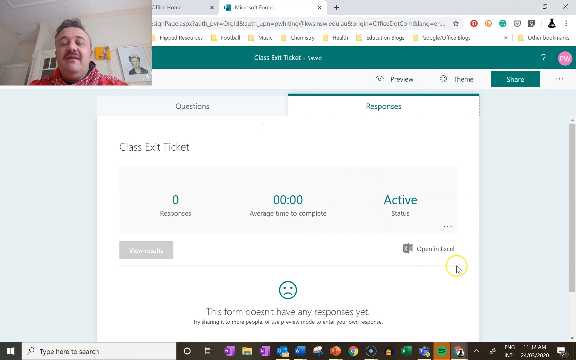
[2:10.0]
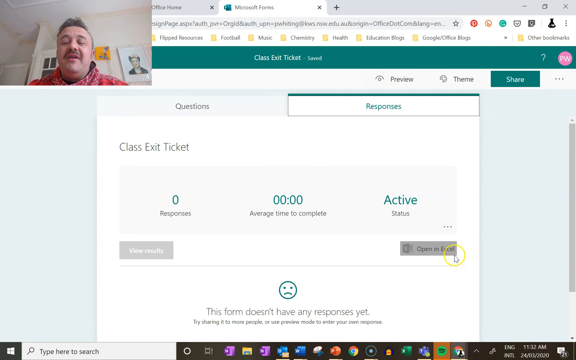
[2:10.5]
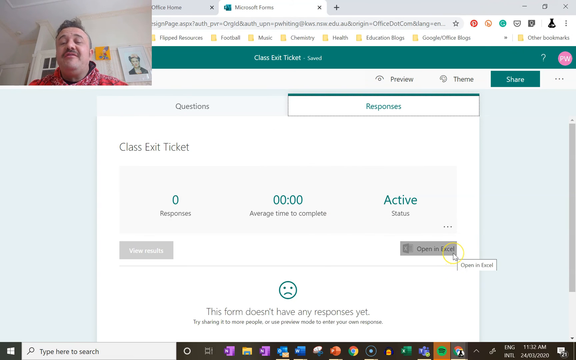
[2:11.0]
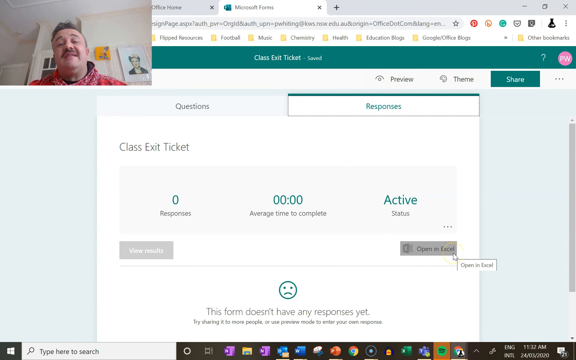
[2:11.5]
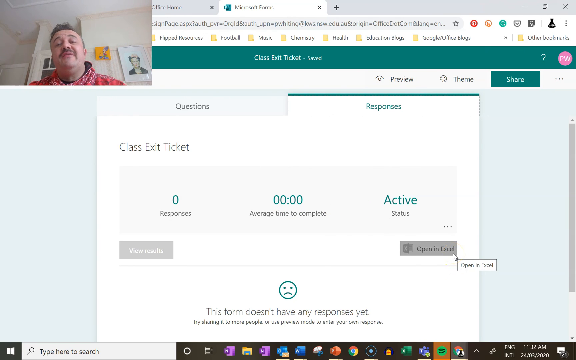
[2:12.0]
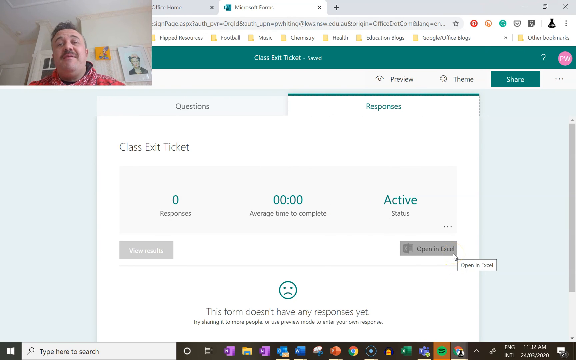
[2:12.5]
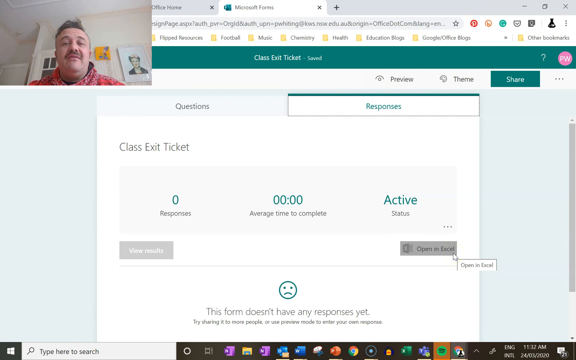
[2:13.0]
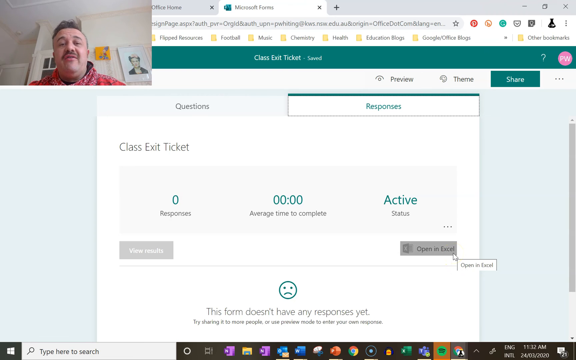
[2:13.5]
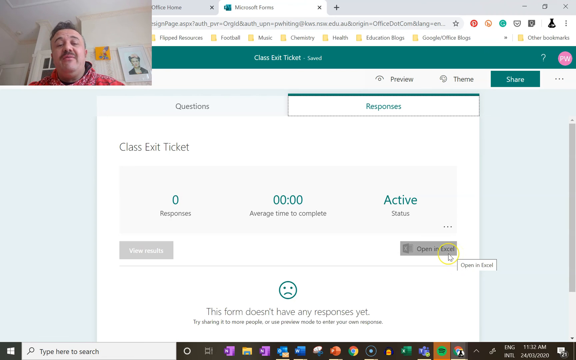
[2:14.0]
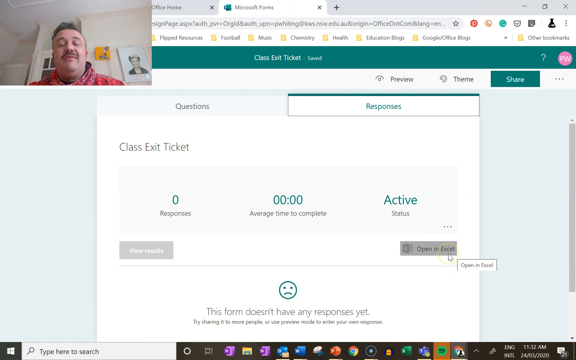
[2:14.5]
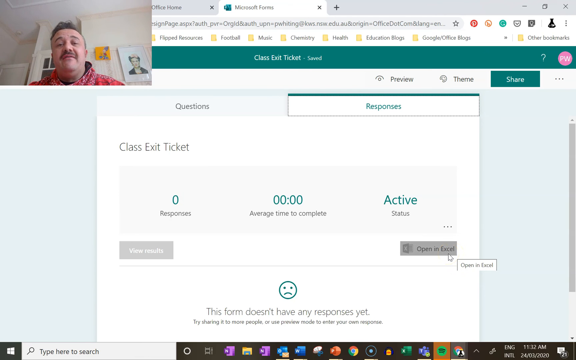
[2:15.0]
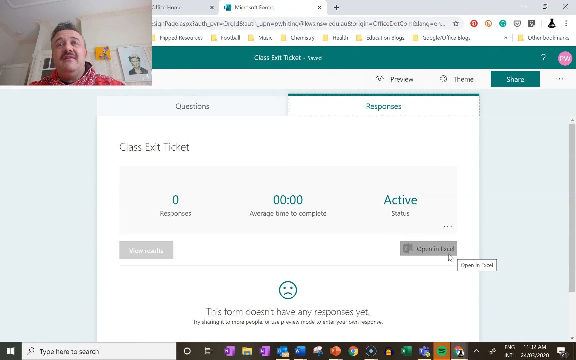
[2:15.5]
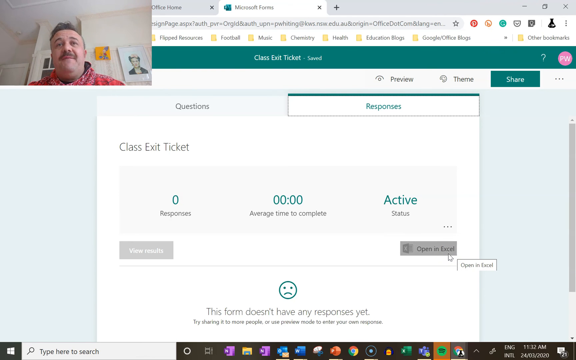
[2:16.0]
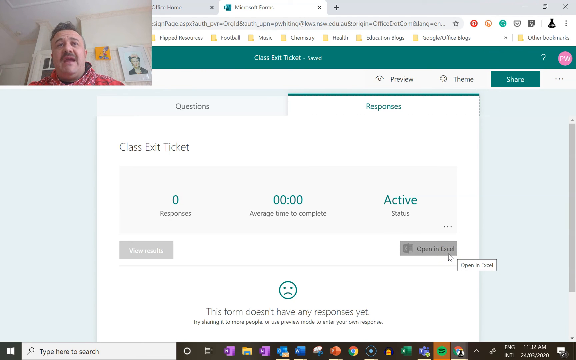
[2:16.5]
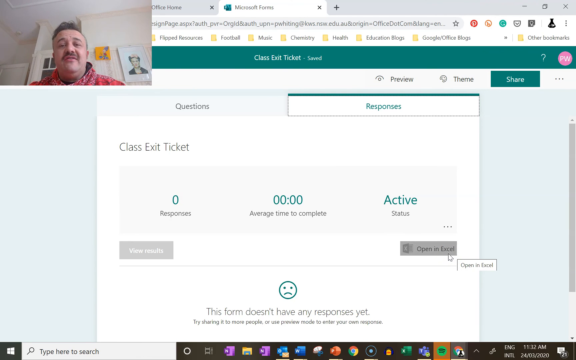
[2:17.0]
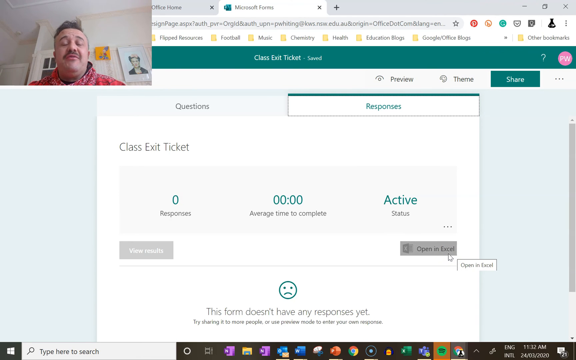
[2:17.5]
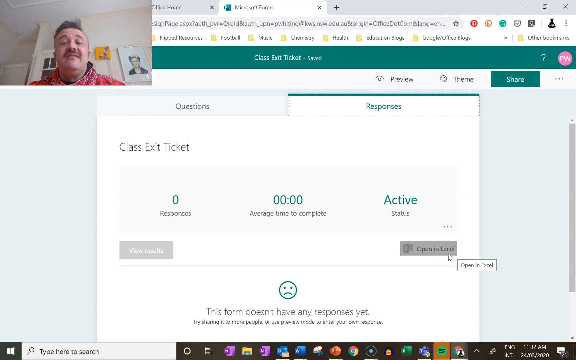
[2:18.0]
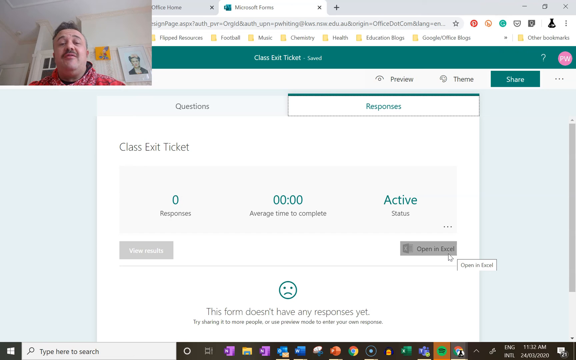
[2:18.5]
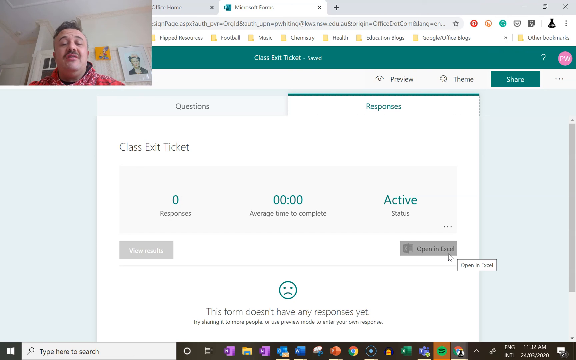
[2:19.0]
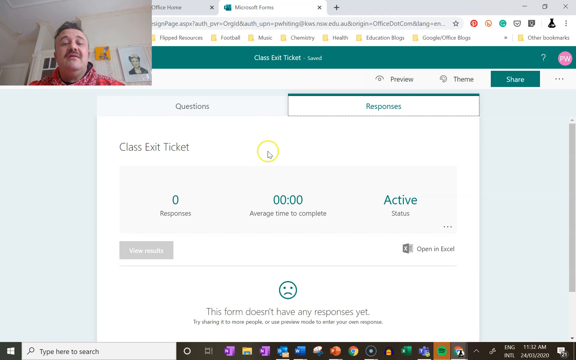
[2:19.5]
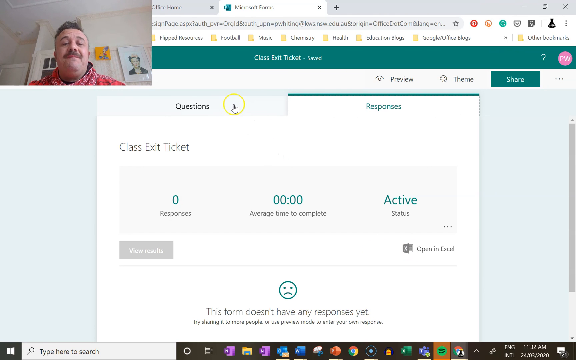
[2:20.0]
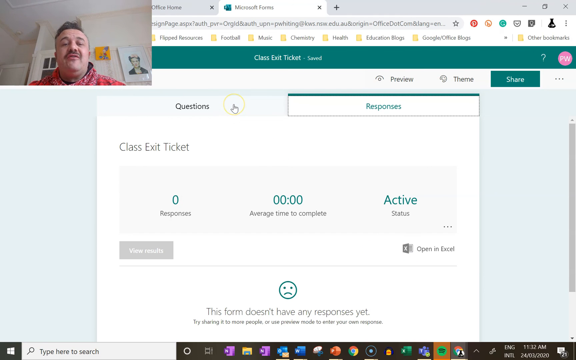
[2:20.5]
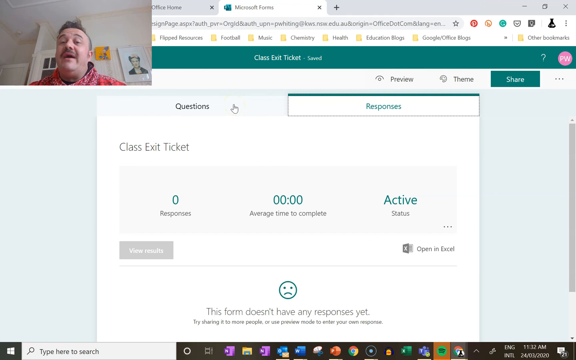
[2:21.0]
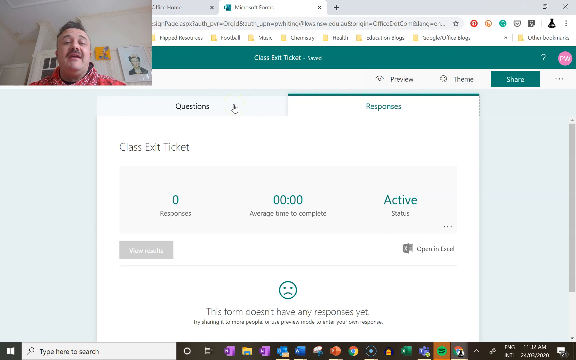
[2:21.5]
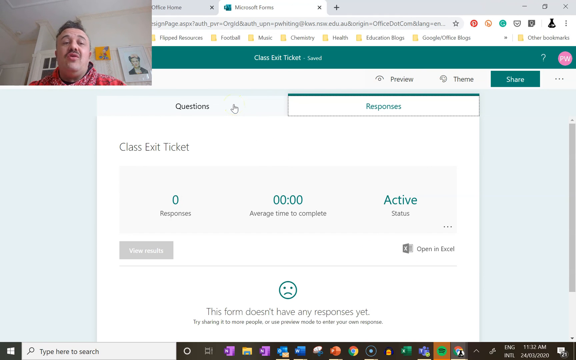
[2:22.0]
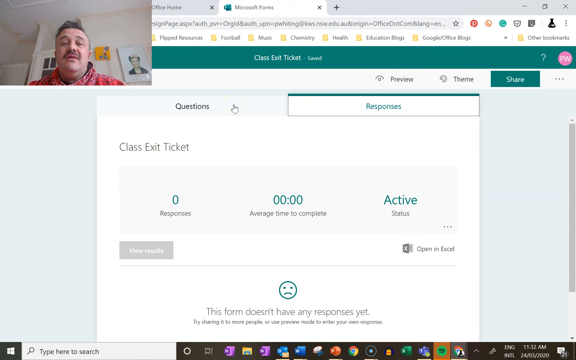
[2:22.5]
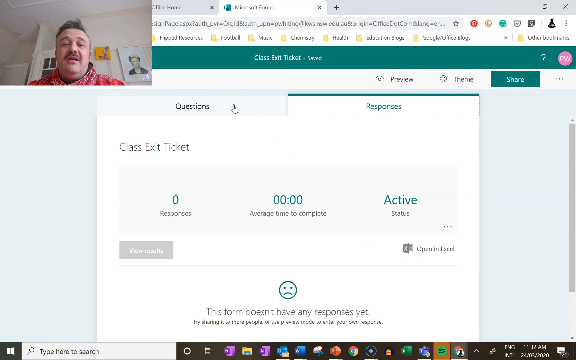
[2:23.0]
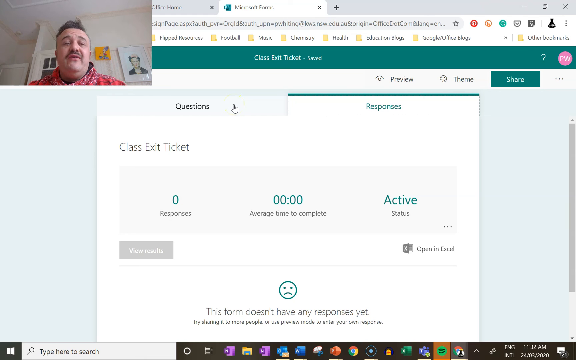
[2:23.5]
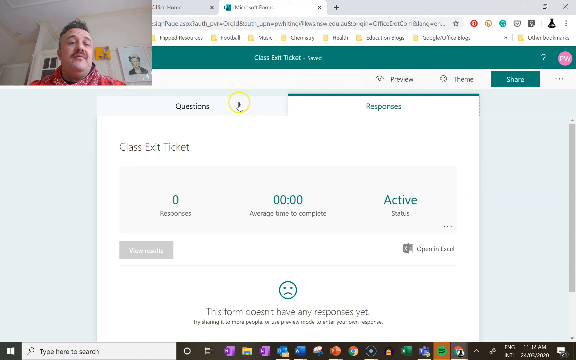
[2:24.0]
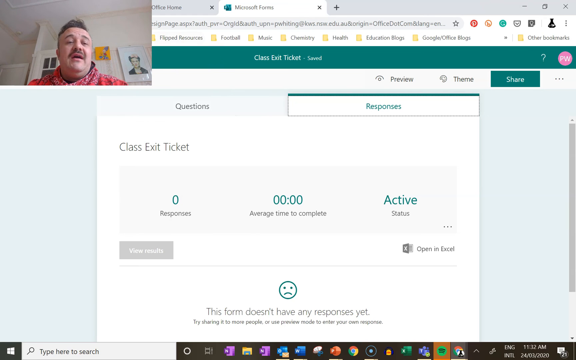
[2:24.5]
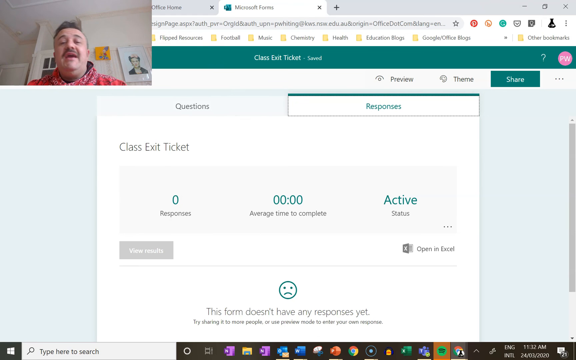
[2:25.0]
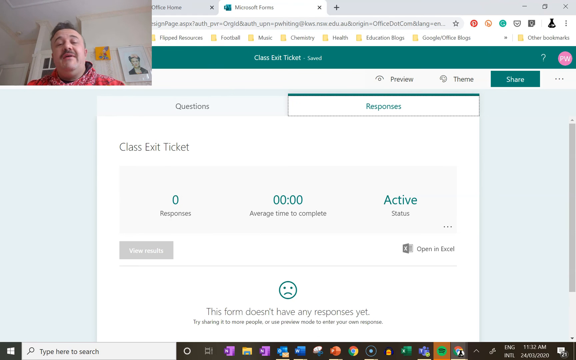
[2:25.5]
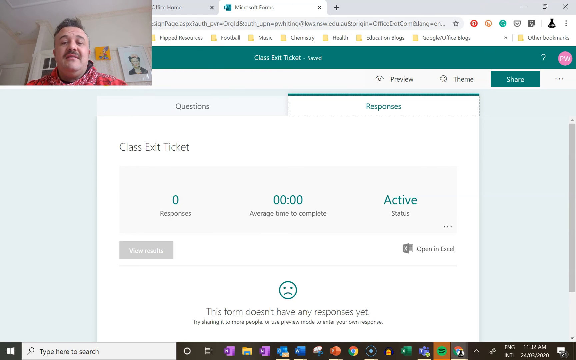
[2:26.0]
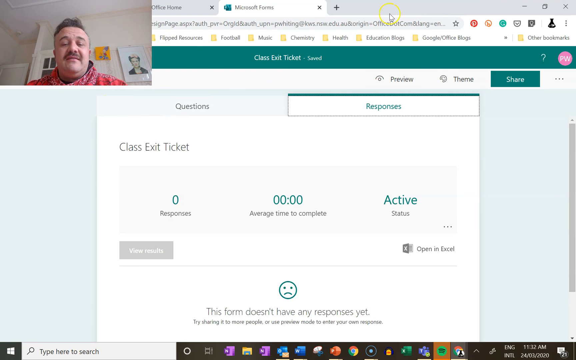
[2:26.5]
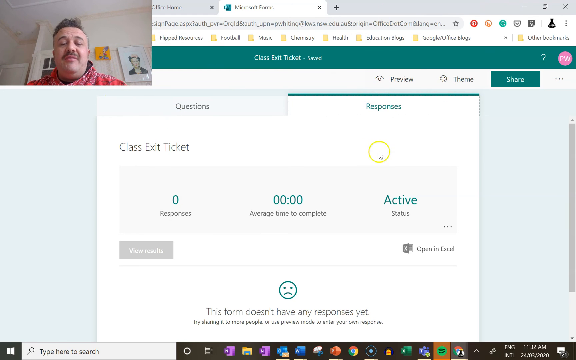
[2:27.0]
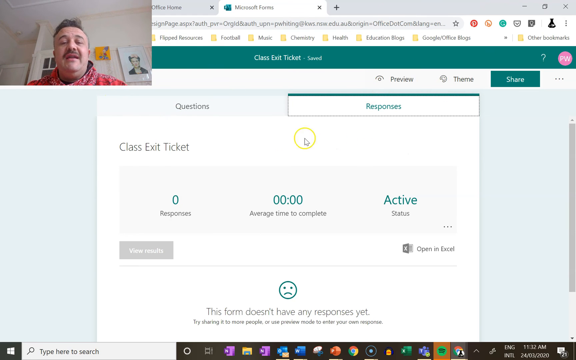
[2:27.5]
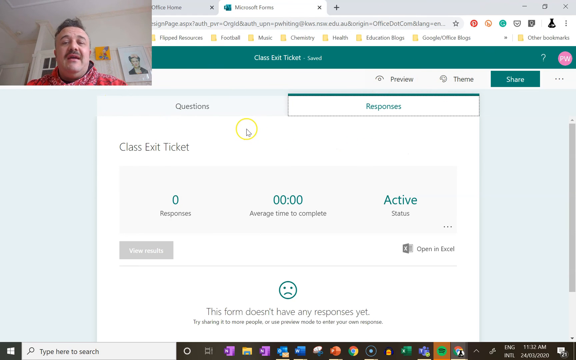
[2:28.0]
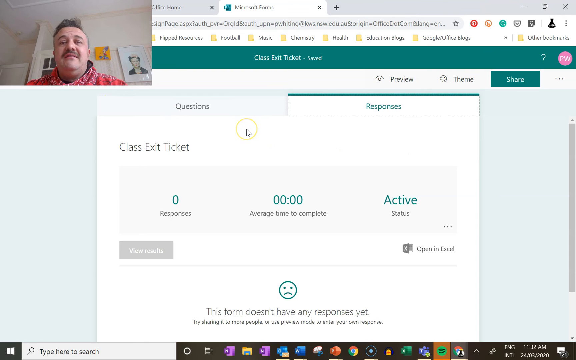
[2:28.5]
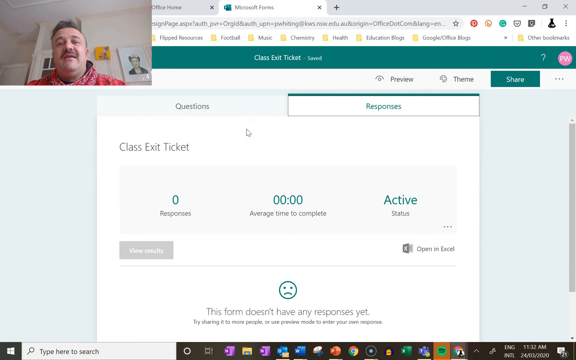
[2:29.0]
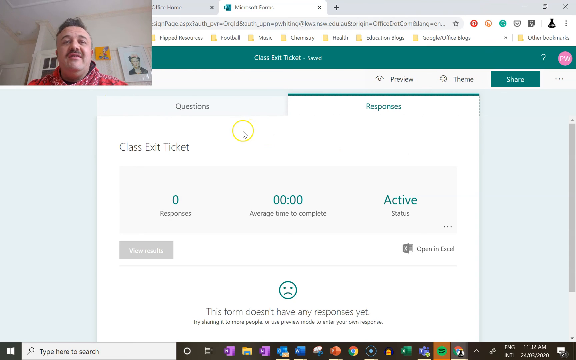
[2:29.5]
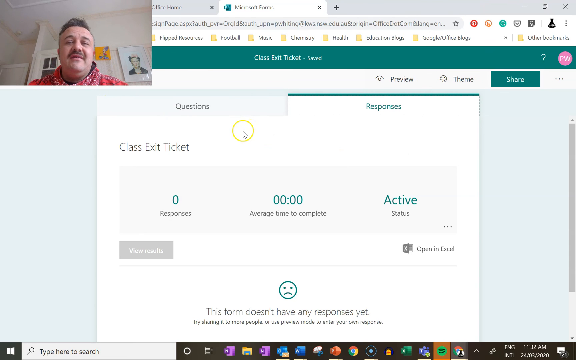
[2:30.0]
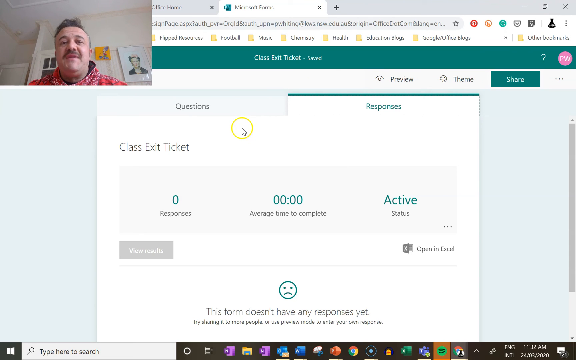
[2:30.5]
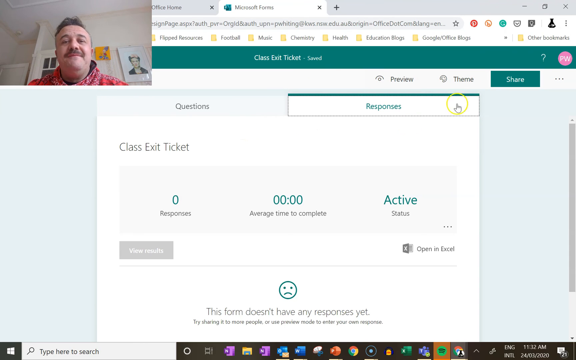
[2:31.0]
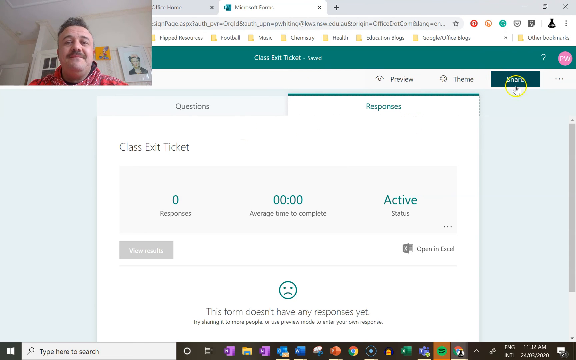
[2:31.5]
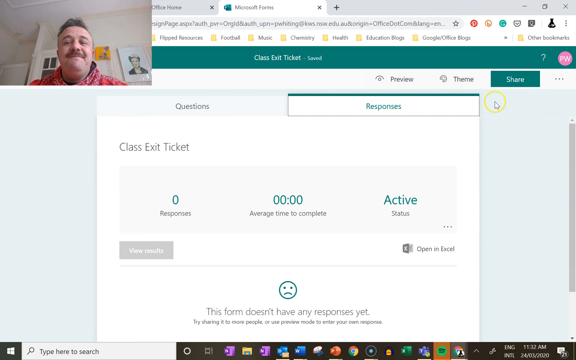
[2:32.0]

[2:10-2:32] The man vlogs from a rectangle shrunk down to the upper left corner so he can share his page. The page says "class exit ticket", and he is at the bottom where it says "open in Excel", clicking that button. He then moves up to "questions", goes further off the screen, kind of circles around with his cursor, and takes it over to "share". The man is in a room with beige walls; behind him on the right are a yellow picture and a white or almost black and white picture. Behind him is what looks like a door or window with some dark panes of glass. The website says "Microsoft Forms", and to the left it says "office home".